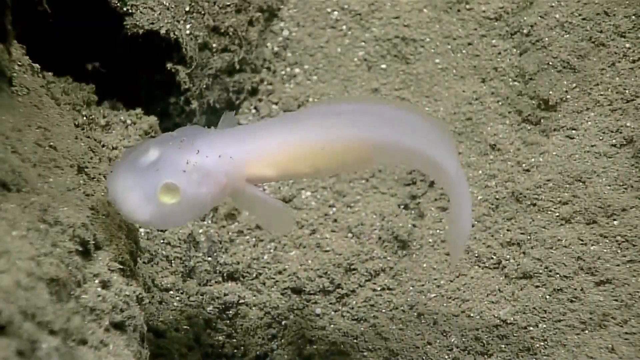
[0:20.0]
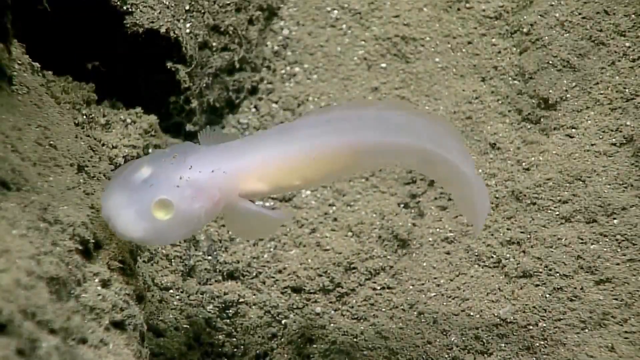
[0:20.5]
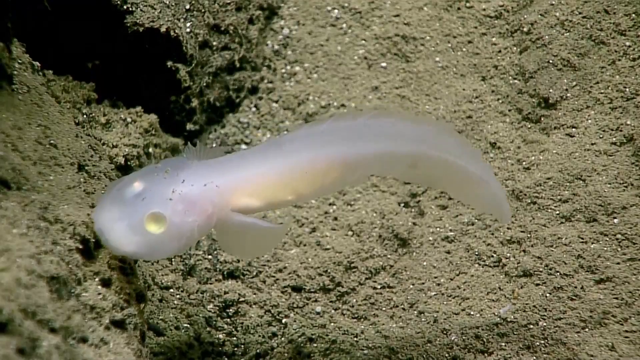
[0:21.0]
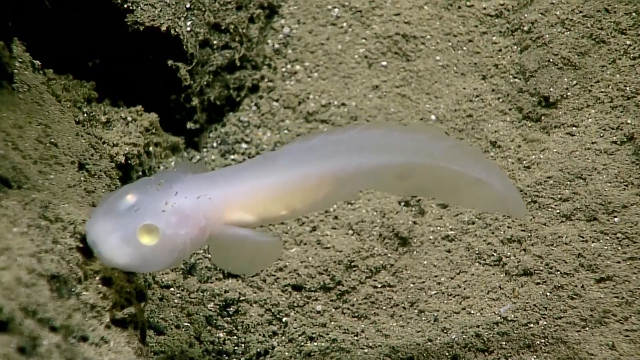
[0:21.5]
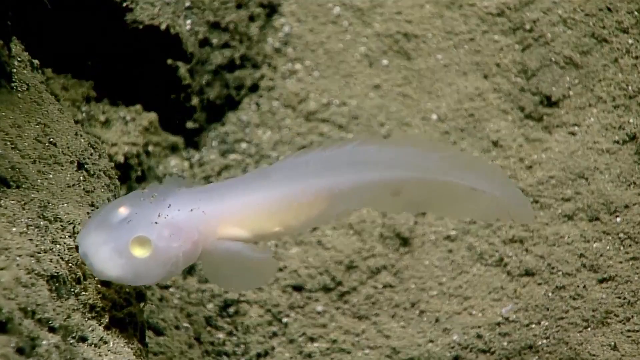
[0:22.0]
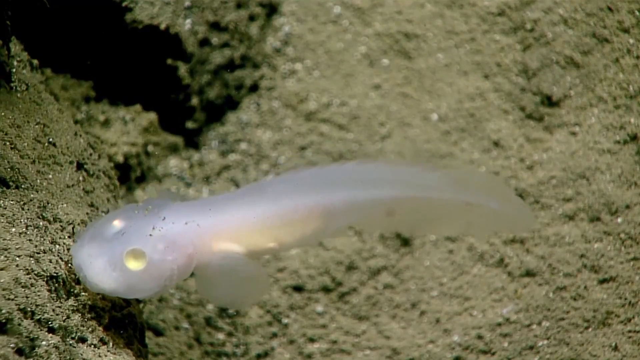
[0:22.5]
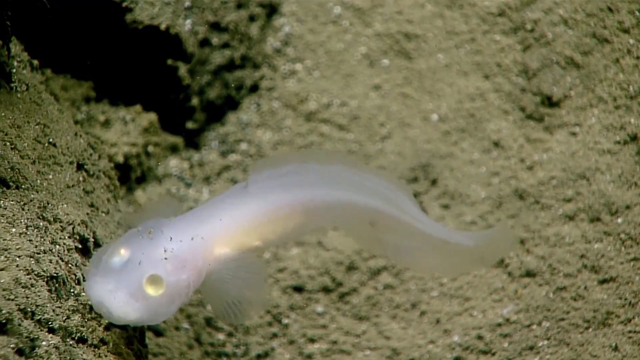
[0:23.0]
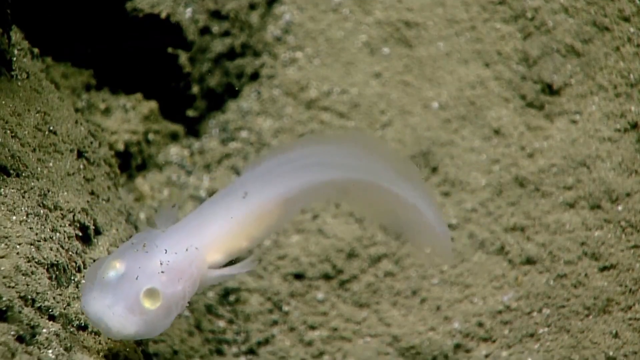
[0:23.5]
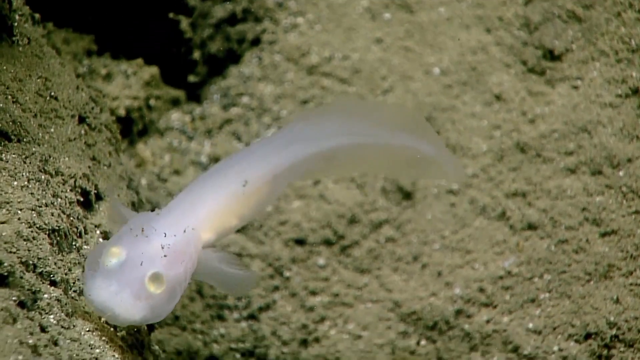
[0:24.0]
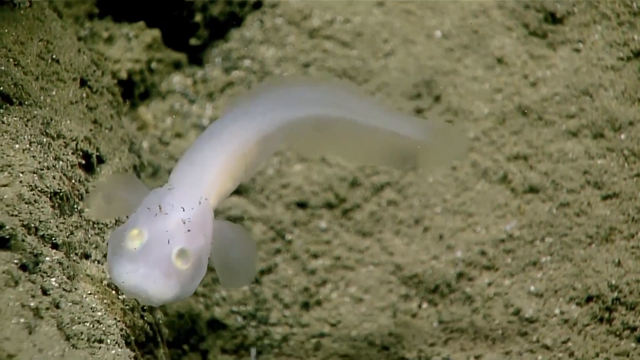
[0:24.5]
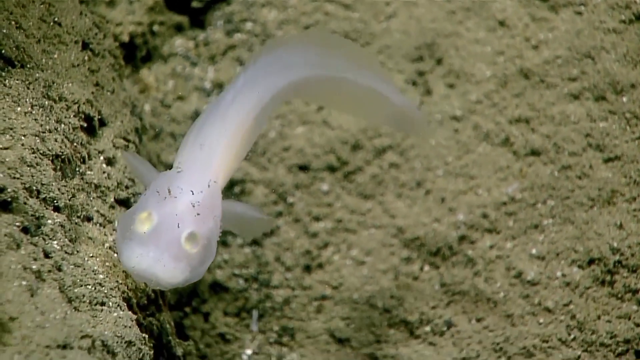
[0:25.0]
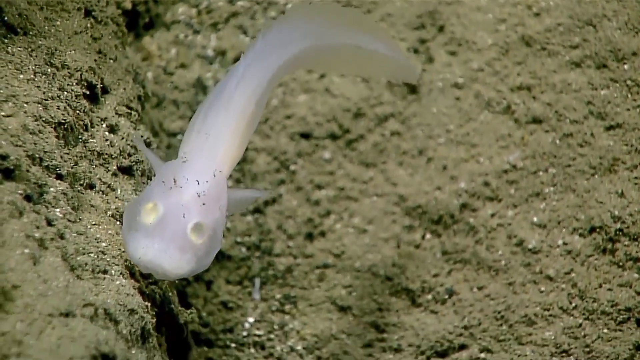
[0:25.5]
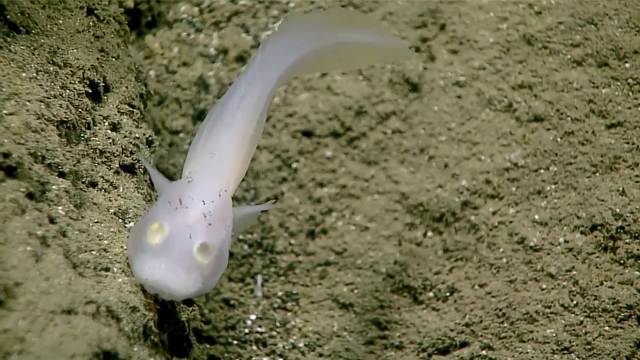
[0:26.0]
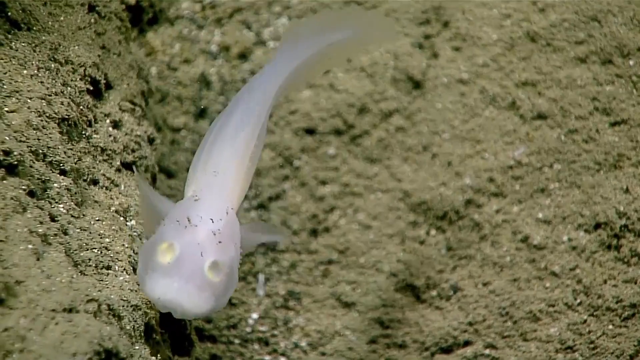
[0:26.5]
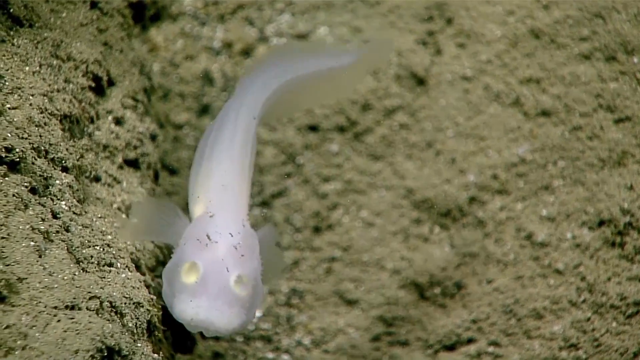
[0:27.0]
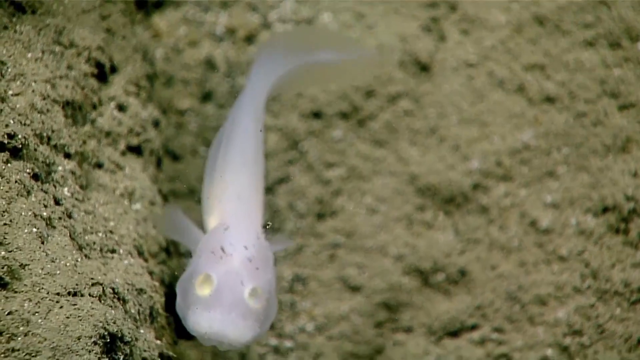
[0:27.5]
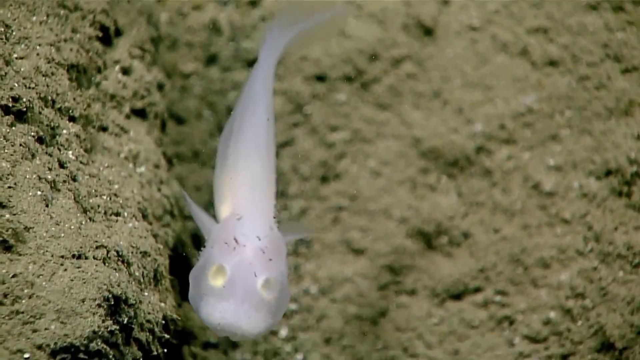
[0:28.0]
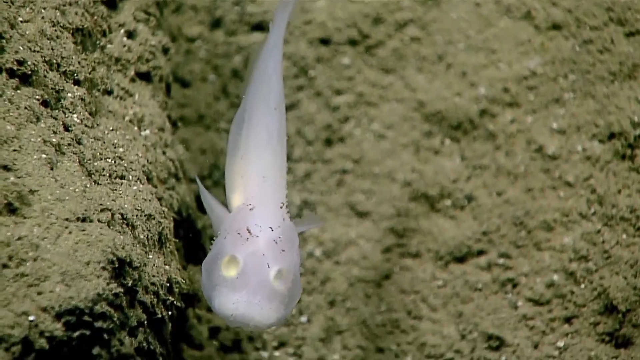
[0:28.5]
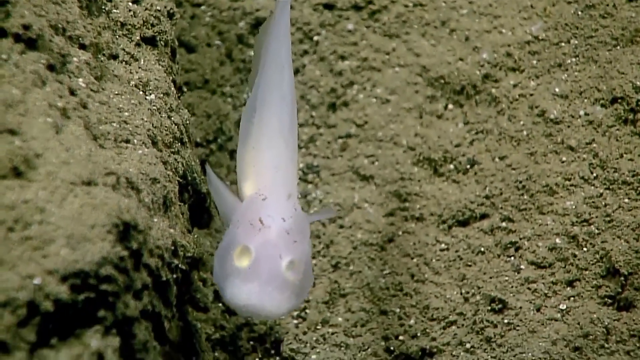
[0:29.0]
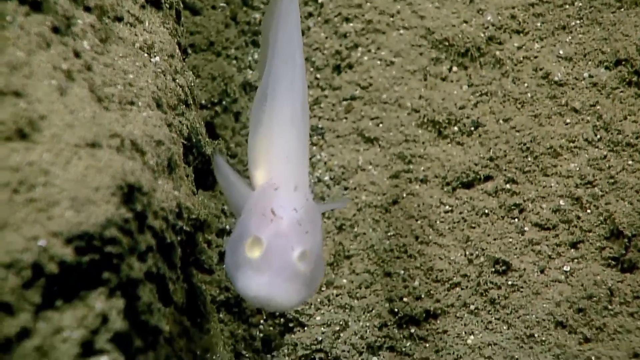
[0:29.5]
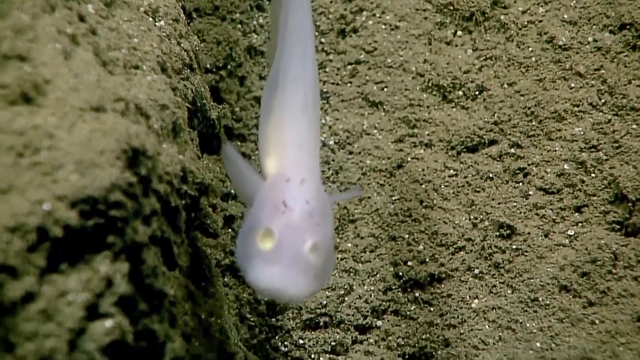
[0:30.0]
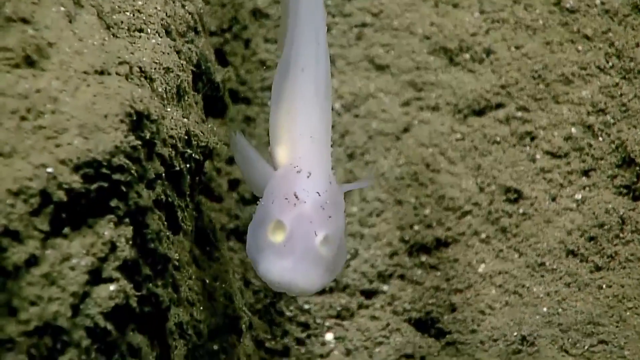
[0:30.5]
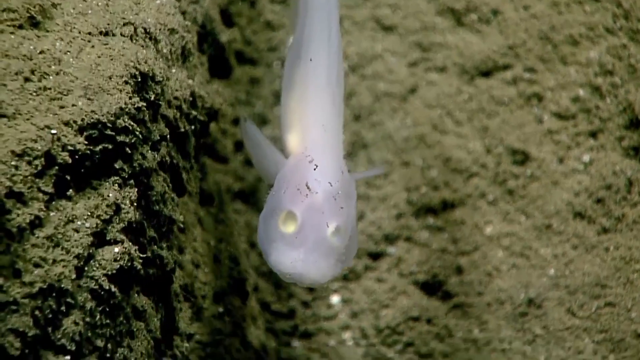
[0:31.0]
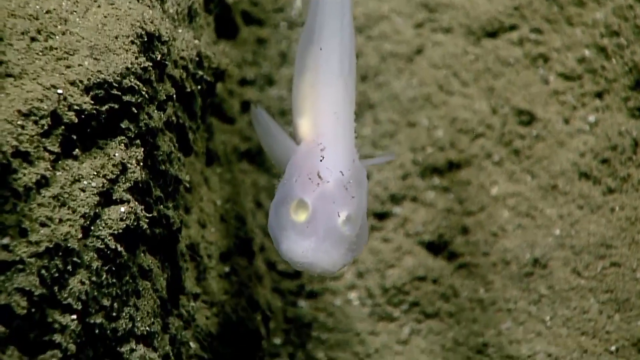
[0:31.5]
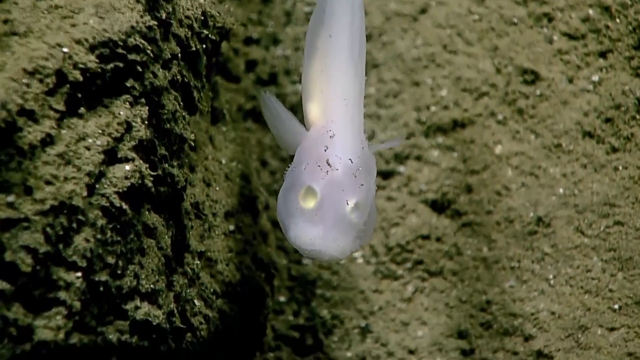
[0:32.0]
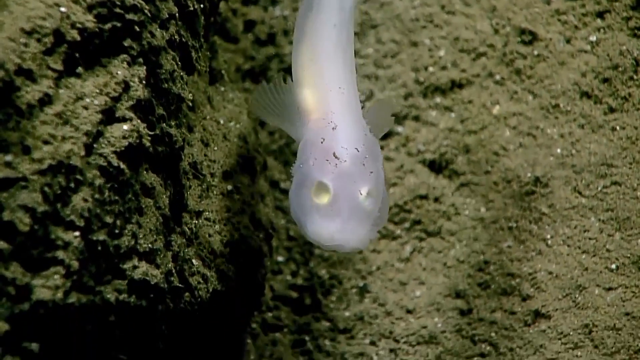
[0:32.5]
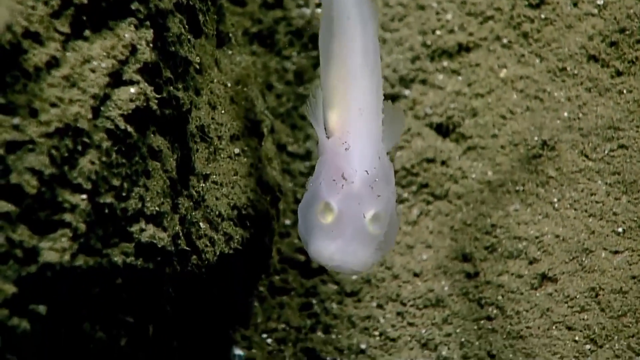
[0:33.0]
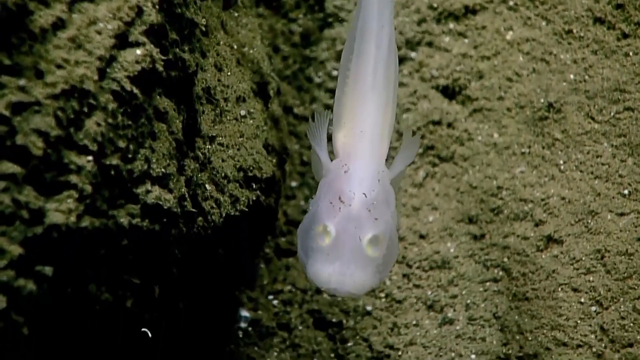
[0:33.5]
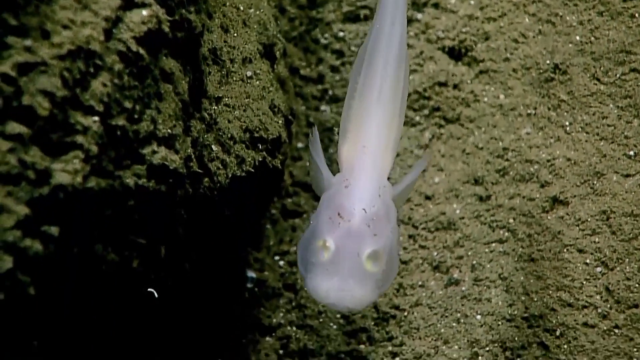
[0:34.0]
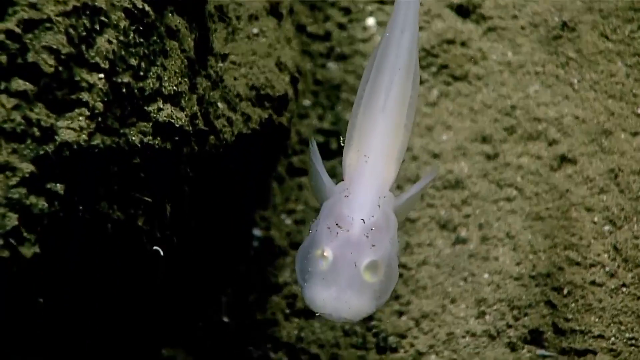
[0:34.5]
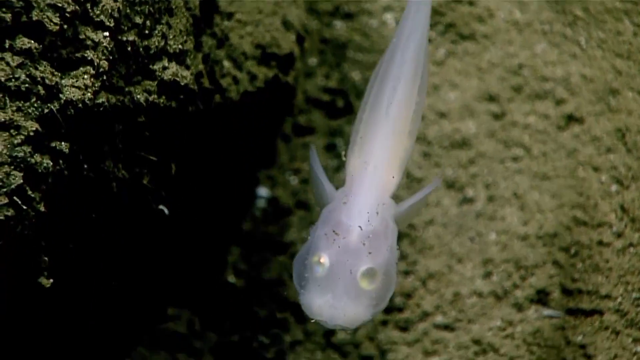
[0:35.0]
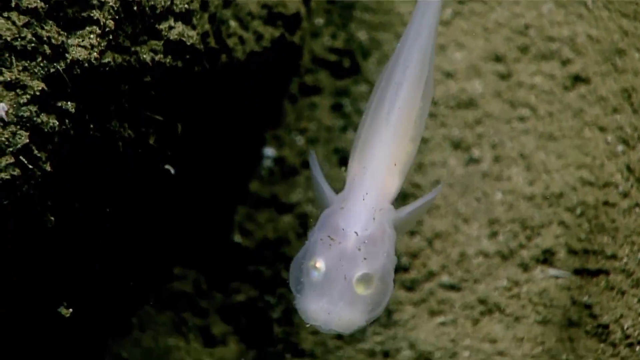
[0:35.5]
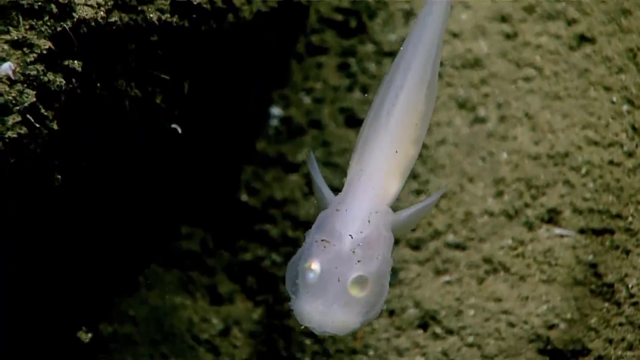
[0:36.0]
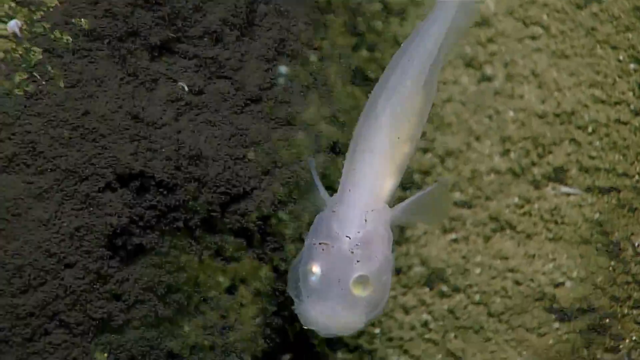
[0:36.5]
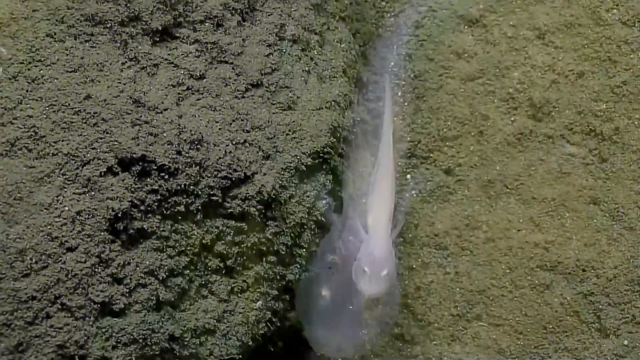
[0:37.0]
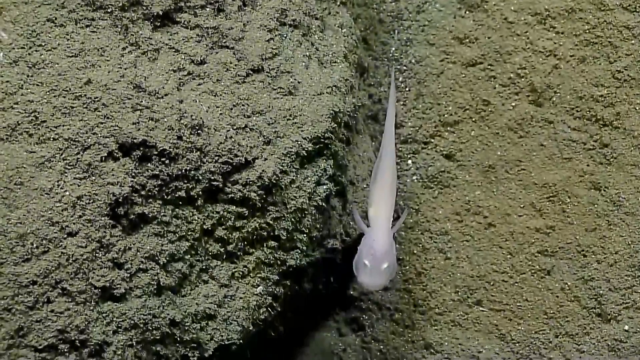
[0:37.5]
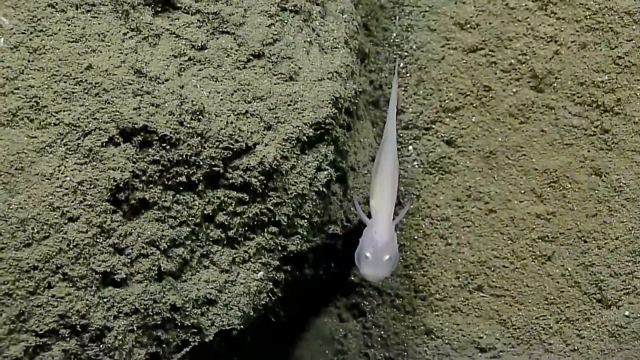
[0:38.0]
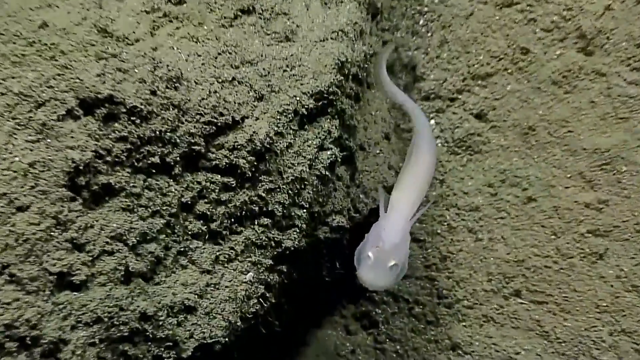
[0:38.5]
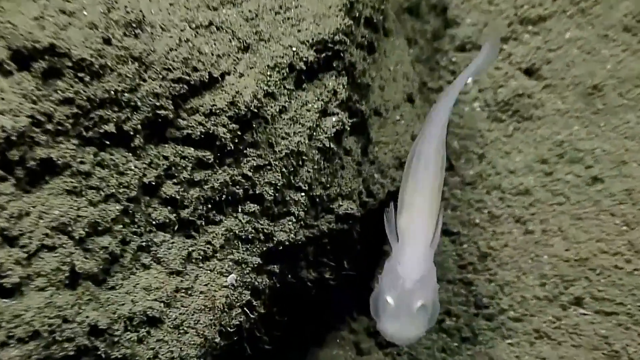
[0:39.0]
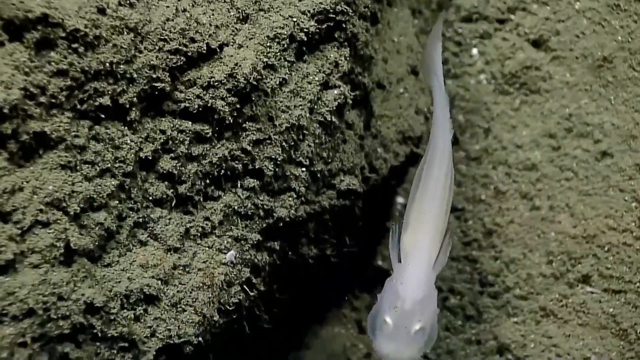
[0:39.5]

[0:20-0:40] At the bottom of the ocean floor in the Mariana's Trench Marine National Monument, brown sediment is scattered with almost white-gold speckles, and small trenches and cracks run through the floor. The sea creature's eyes are gold and reflective, and its belly area has an almost gold-orange tone. A line runs along the length of its body, possibly a spine. Around the mouth area of the delicate-looking creature, the color is a denser white. It carefully moves along a ledge on the Mariana Trench floor while other minute sea life floats and moves through the water along the ocean floor. As the Aphyonidae SP speeds up, it begins to wriggle its long, sleek body back and forth quickly.